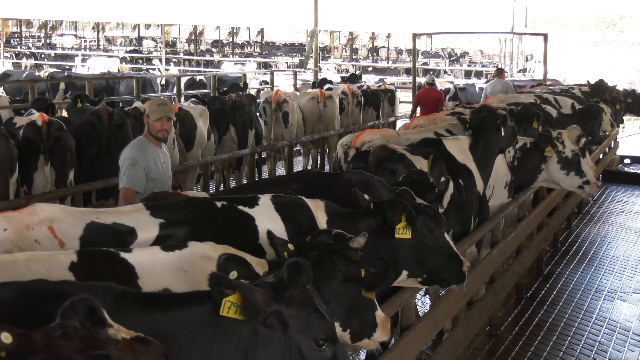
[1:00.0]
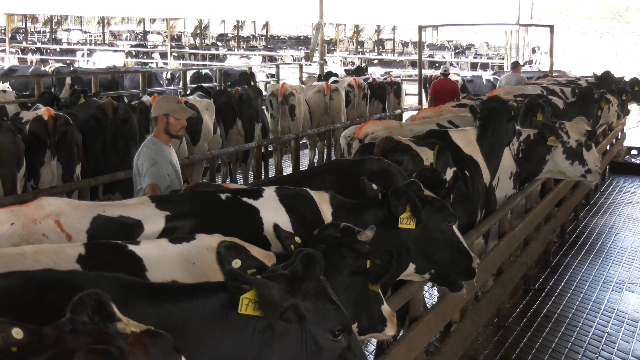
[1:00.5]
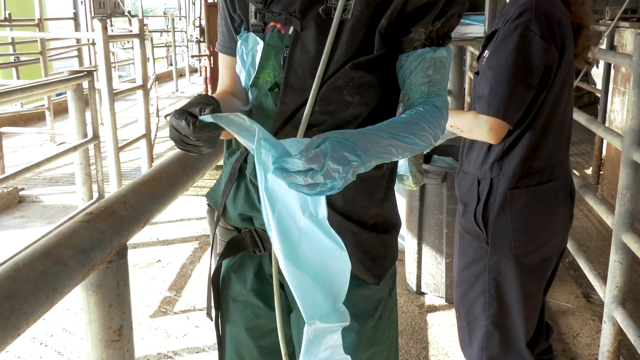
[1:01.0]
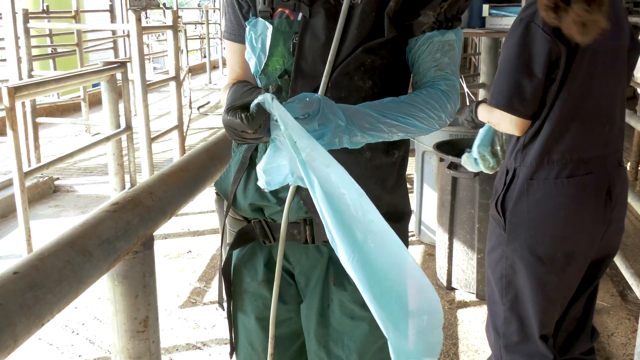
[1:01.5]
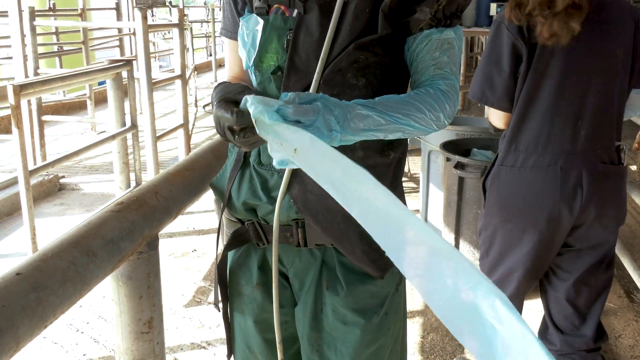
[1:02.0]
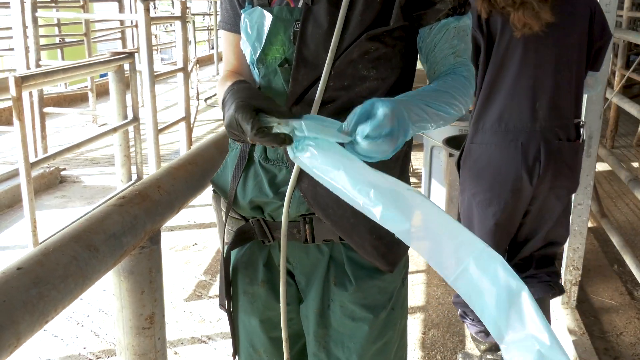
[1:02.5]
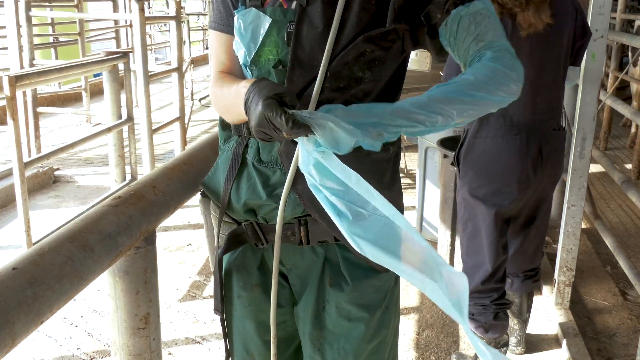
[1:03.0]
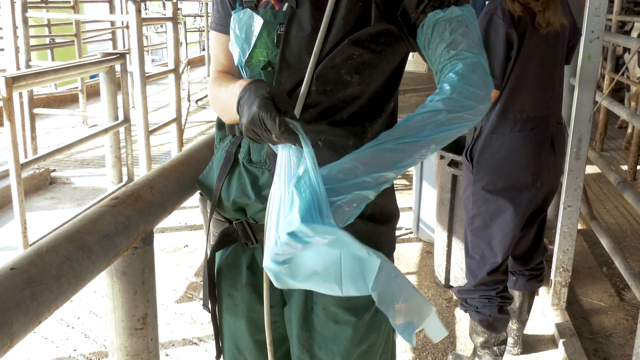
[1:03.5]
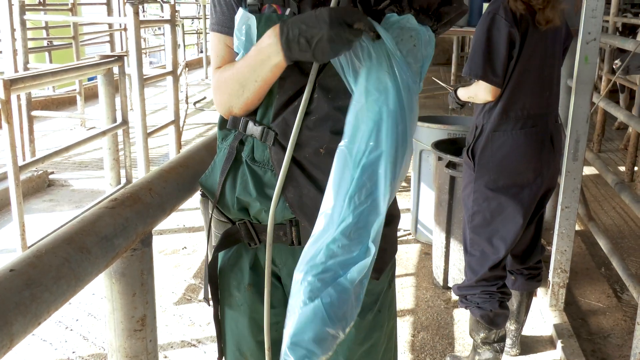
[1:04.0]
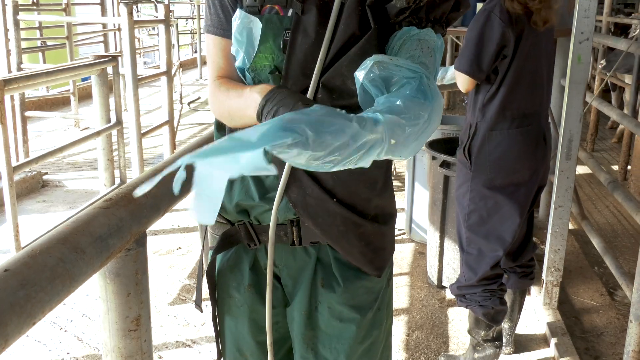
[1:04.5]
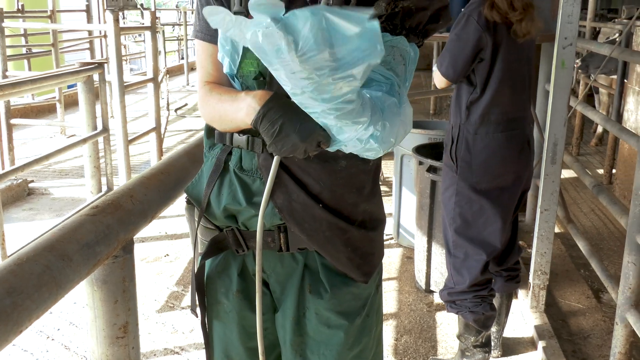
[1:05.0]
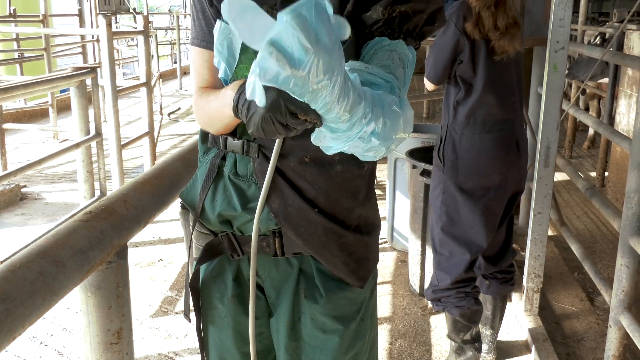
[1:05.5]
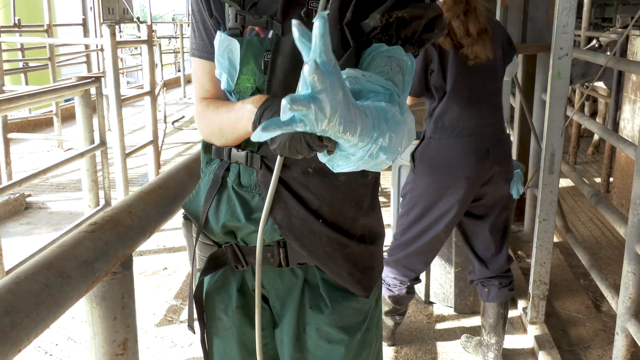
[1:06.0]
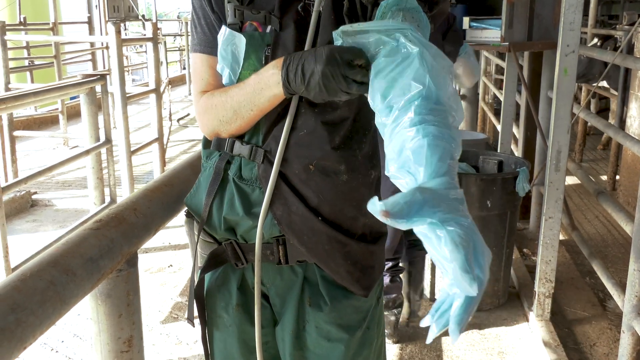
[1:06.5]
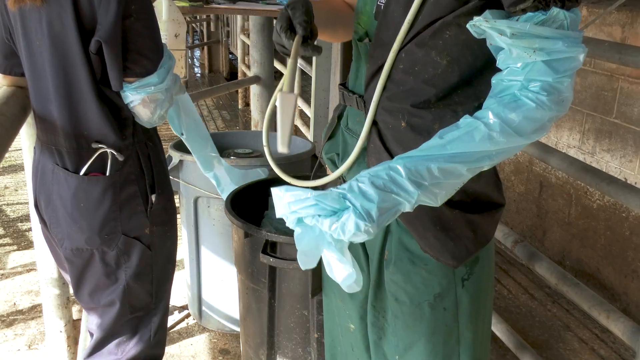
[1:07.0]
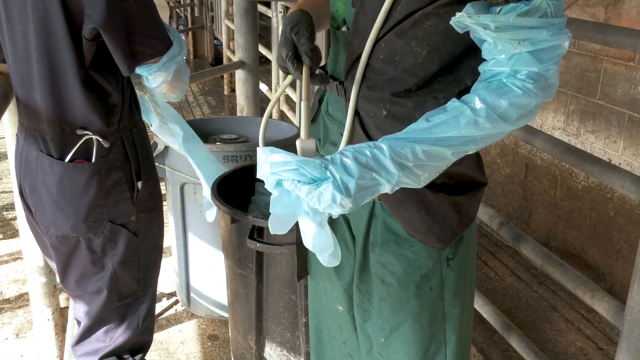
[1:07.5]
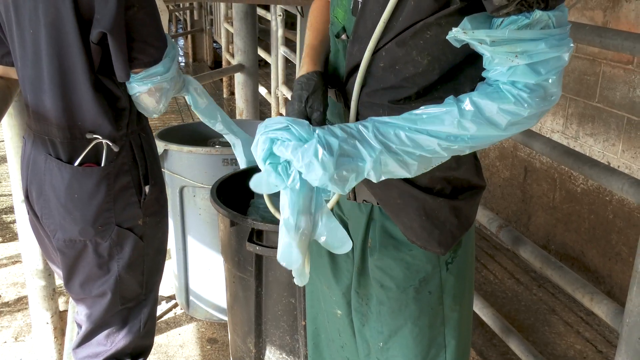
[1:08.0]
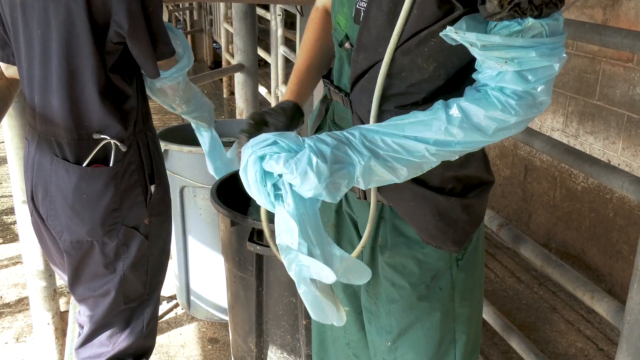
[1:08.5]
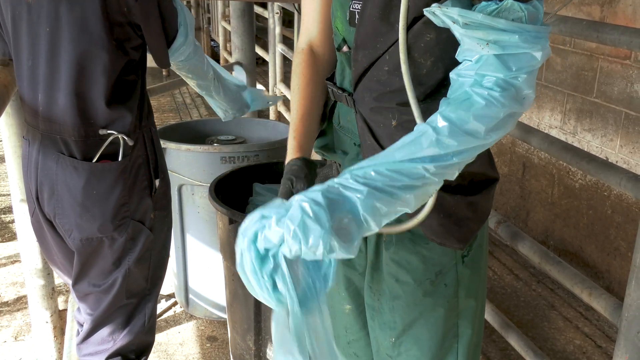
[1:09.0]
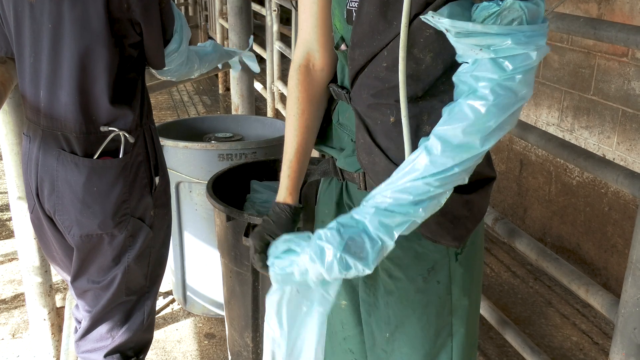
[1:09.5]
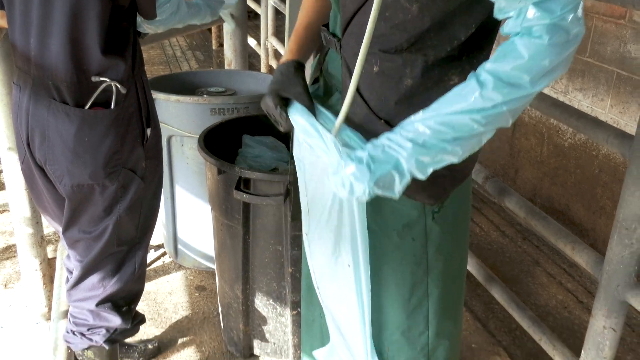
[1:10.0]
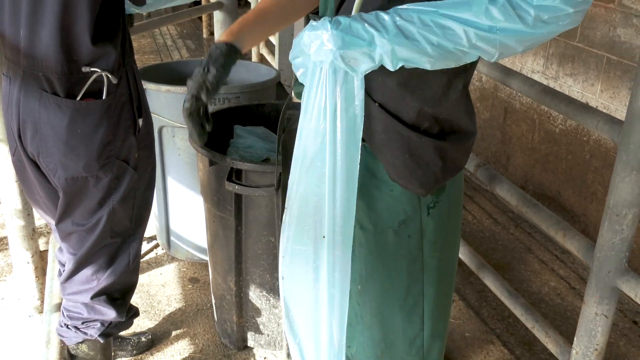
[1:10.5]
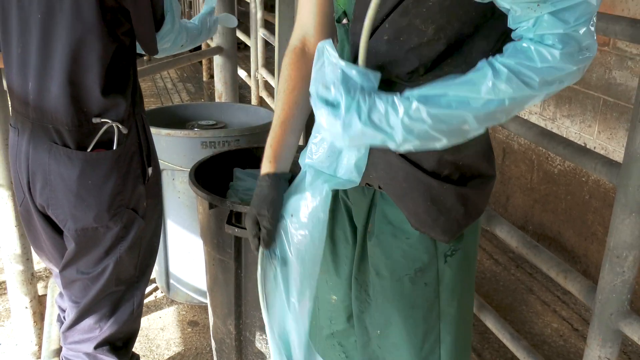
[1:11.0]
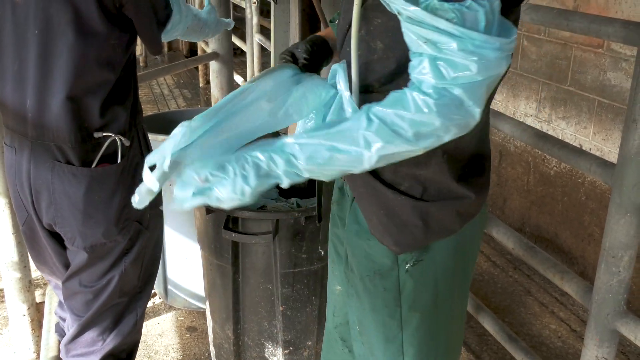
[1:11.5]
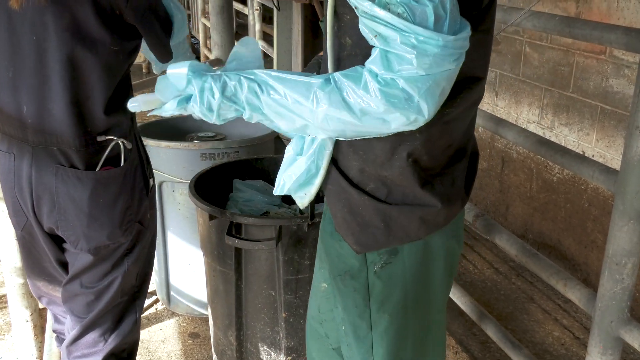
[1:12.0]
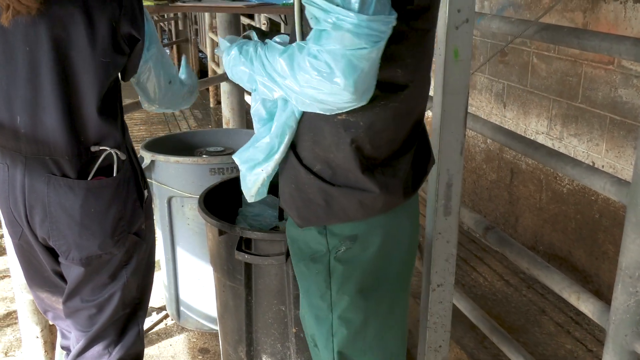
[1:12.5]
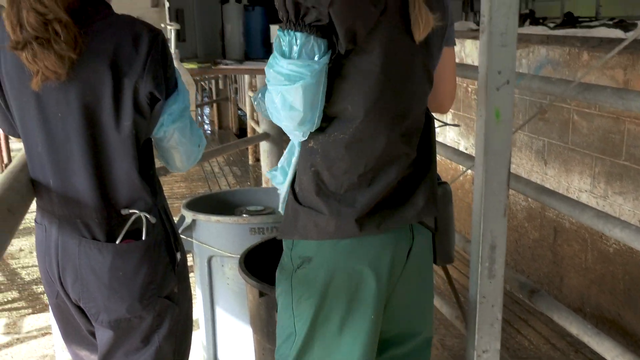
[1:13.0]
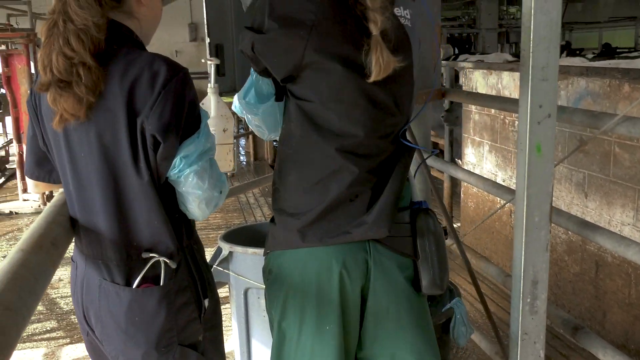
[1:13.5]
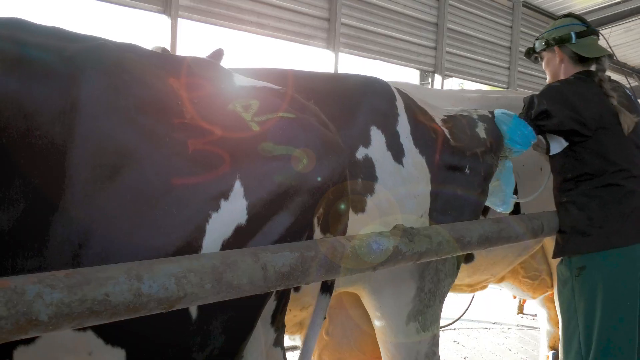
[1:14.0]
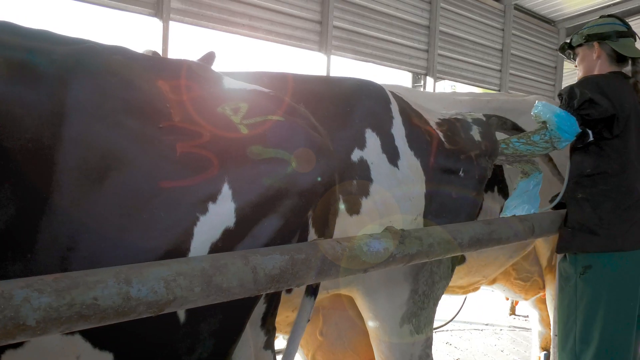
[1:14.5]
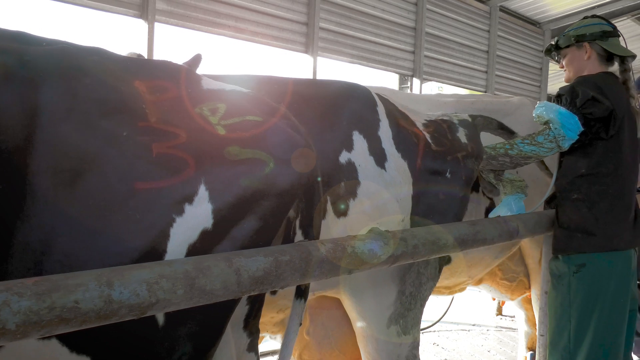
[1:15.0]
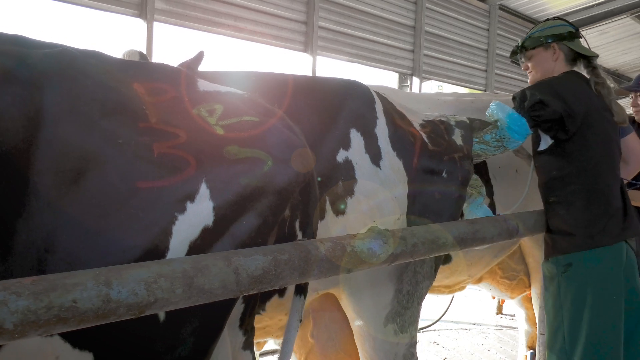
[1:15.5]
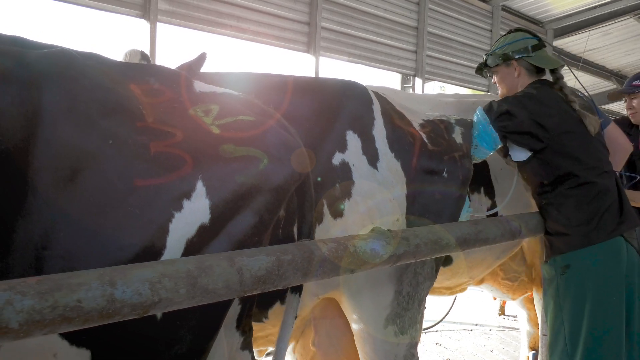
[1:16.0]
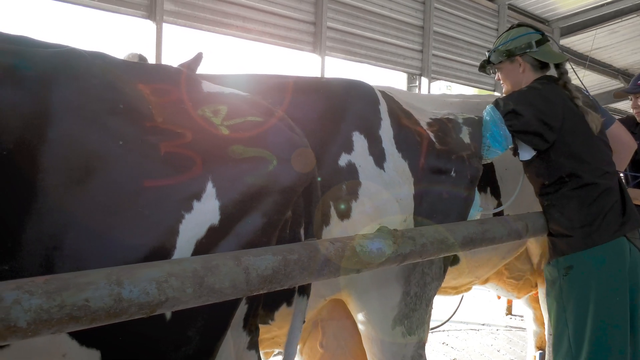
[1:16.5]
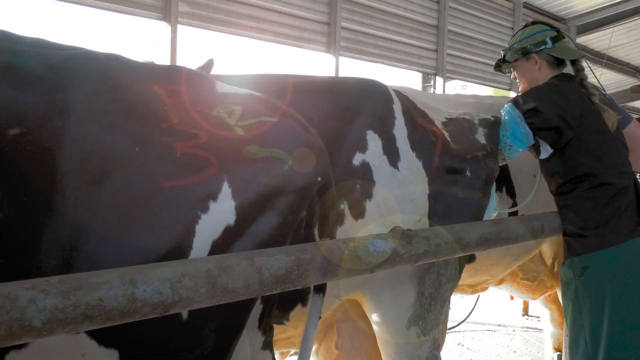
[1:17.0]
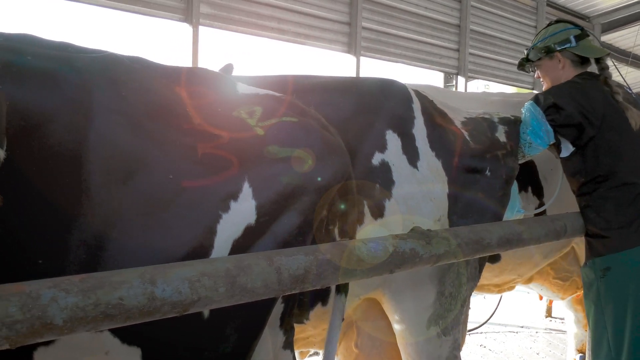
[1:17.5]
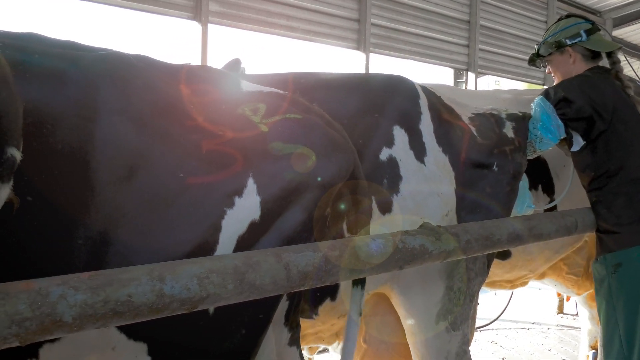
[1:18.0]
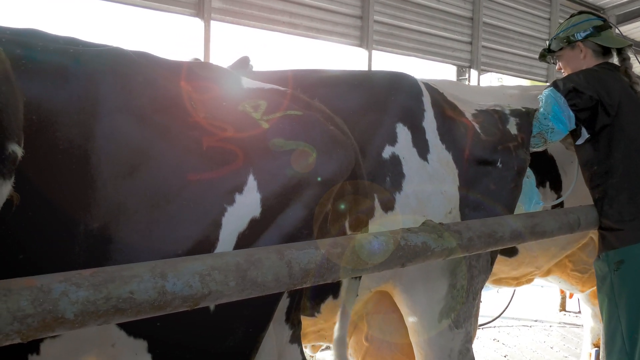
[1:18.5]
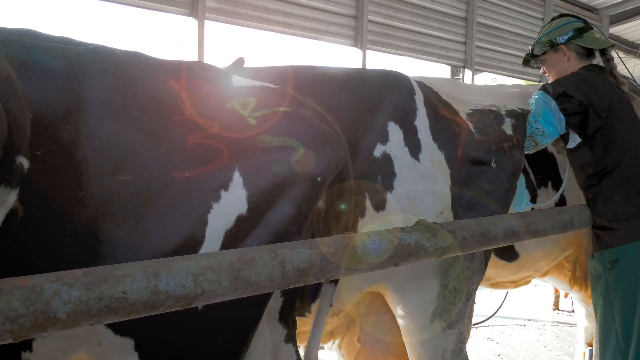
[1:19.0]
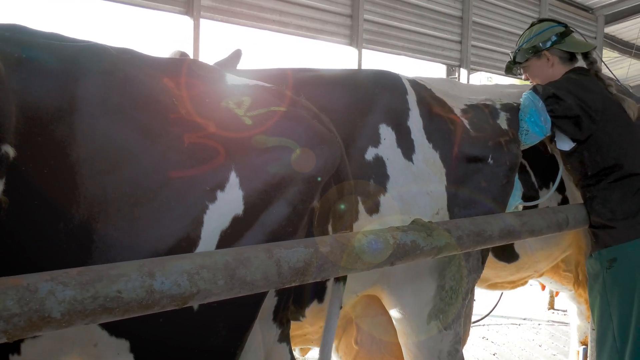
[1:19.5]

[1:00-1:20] A worker puts on very long, protective gloves, two gloves layered on one hand. A probe is put inside one of the gloves rather than a hand, and this is inserted into the cow, apparently to clean out excrement or anything that needs to be removed. The process is very hands-on.